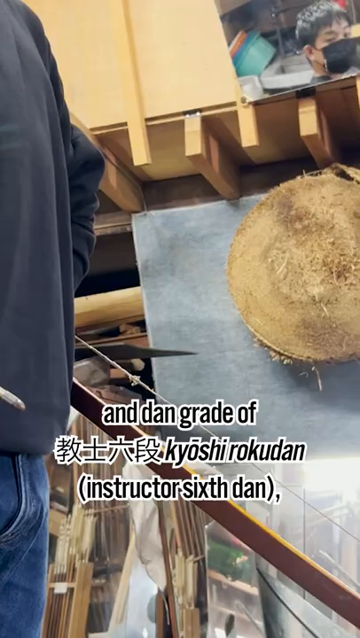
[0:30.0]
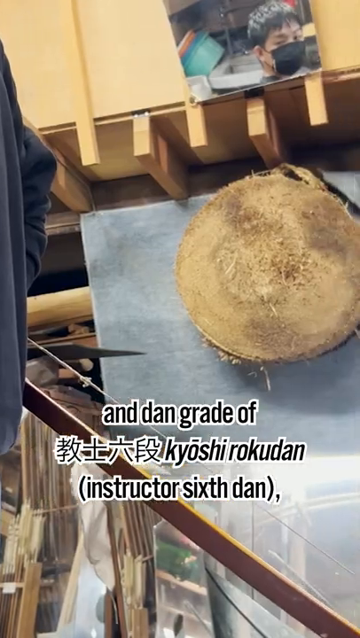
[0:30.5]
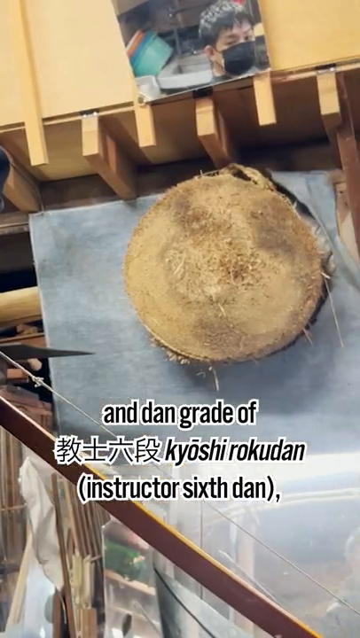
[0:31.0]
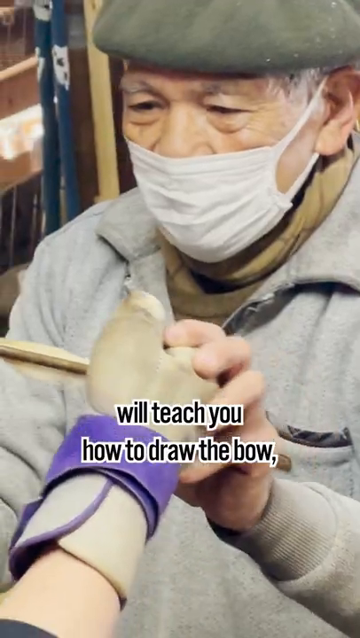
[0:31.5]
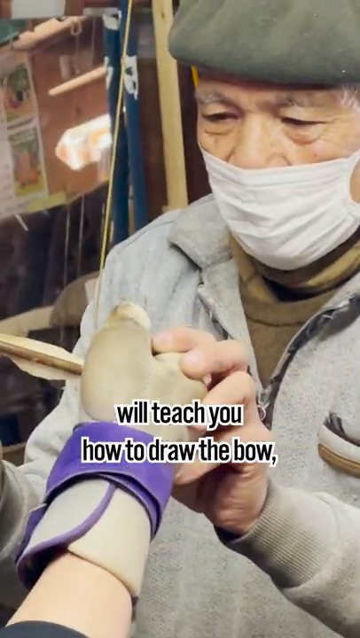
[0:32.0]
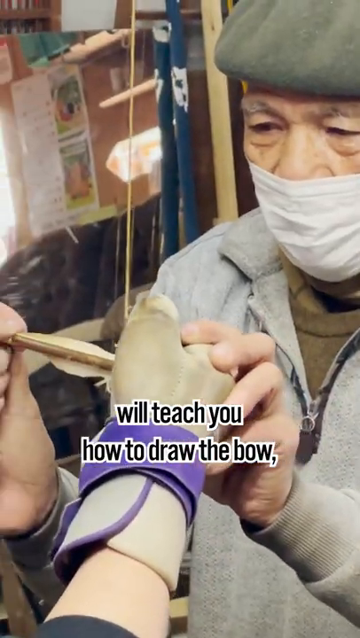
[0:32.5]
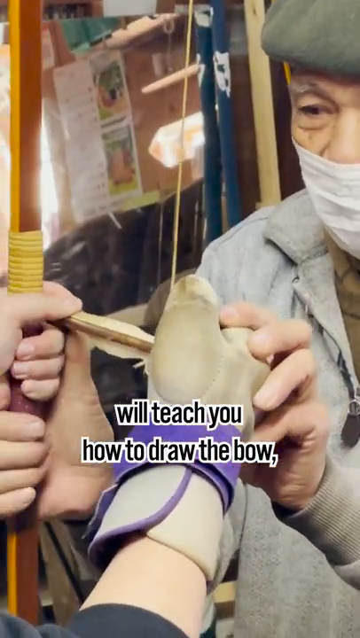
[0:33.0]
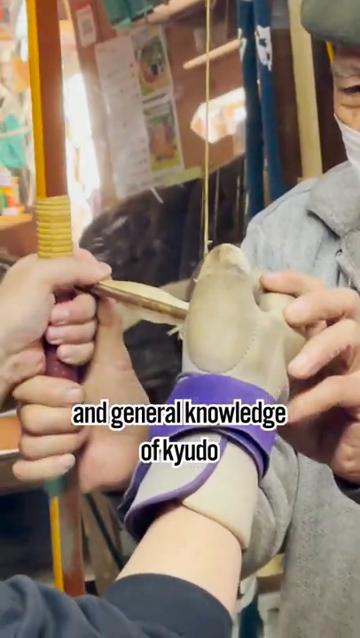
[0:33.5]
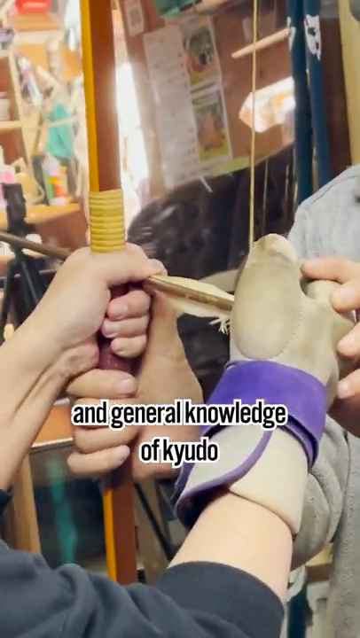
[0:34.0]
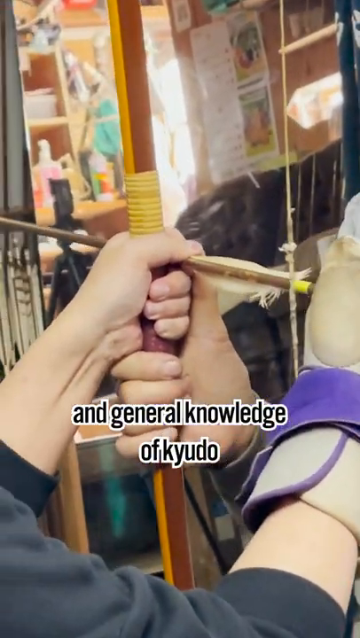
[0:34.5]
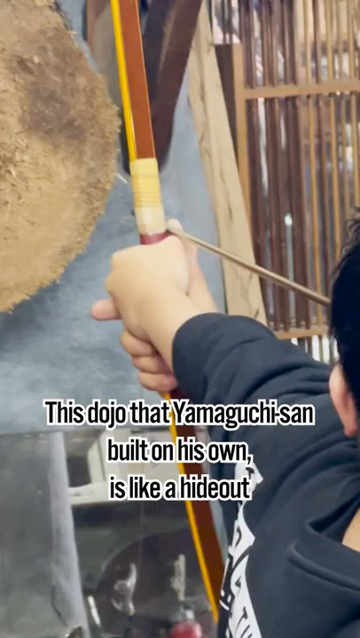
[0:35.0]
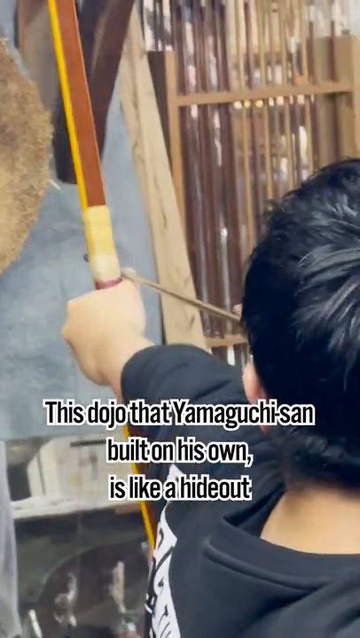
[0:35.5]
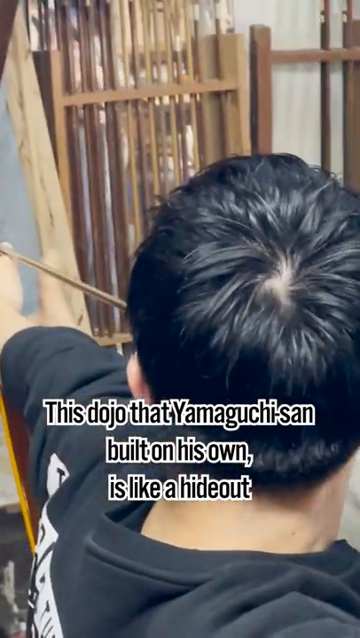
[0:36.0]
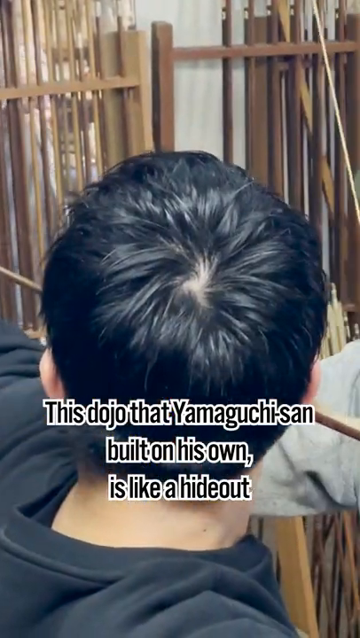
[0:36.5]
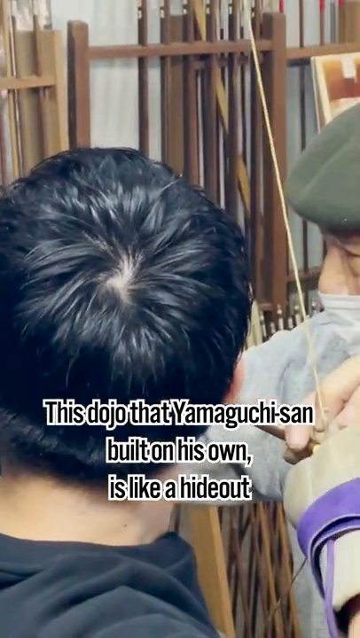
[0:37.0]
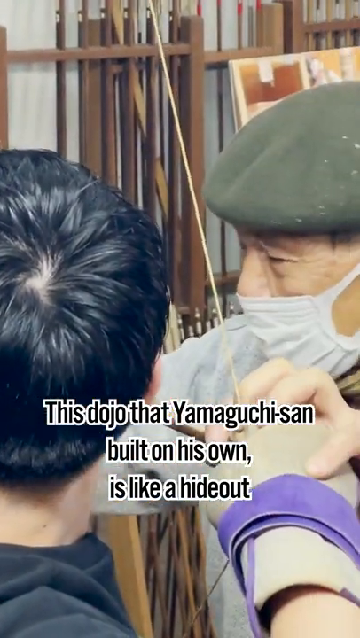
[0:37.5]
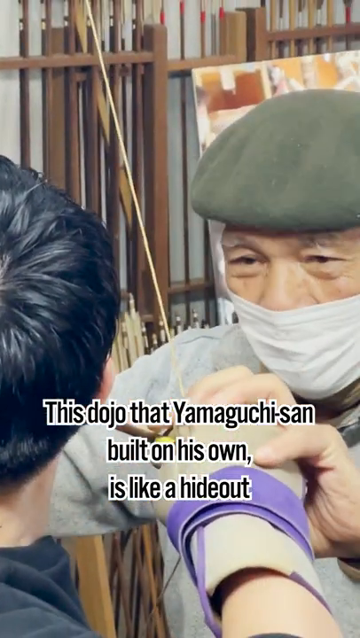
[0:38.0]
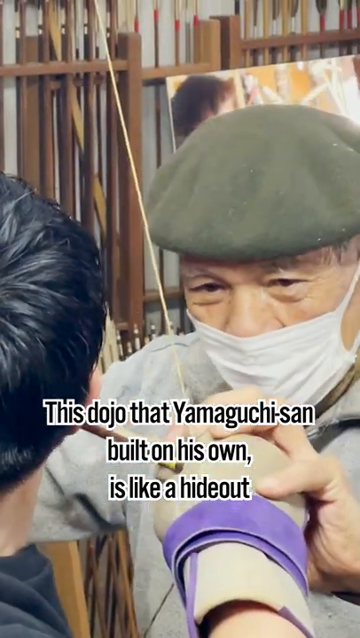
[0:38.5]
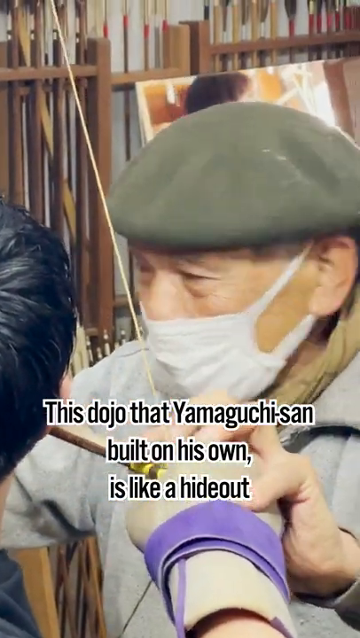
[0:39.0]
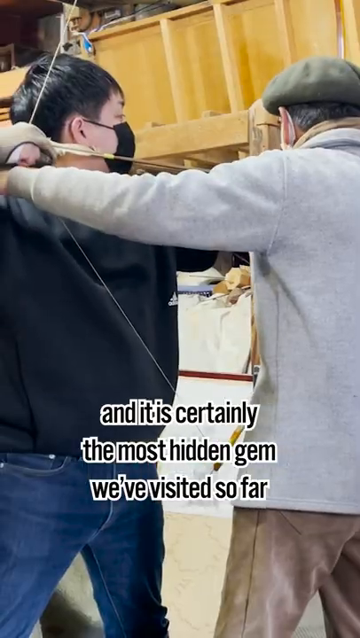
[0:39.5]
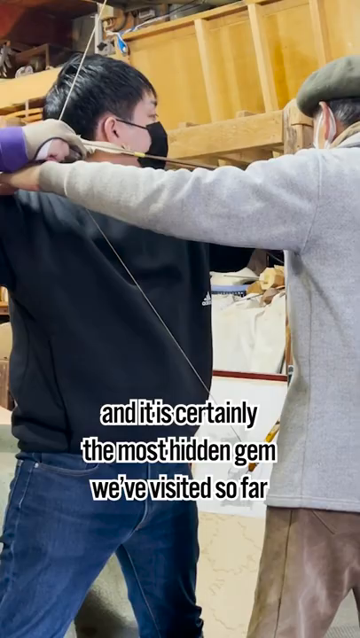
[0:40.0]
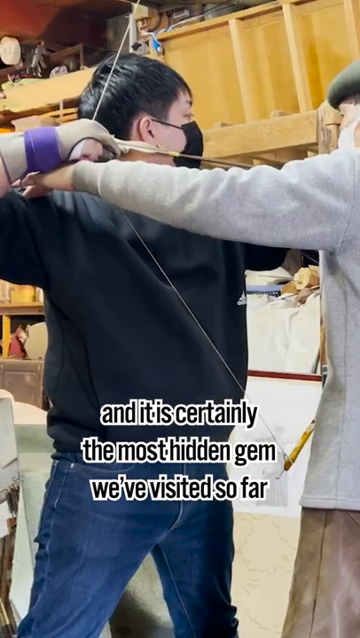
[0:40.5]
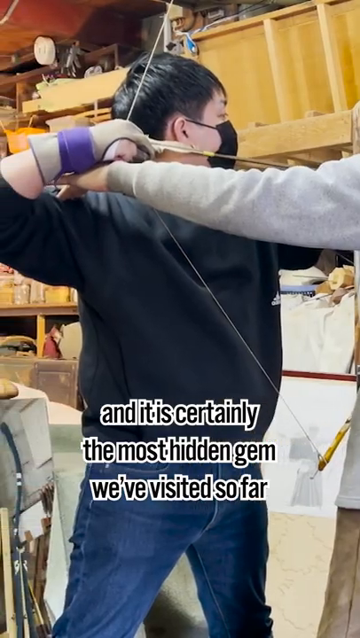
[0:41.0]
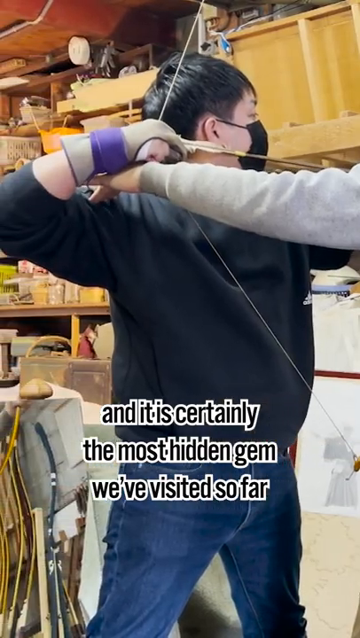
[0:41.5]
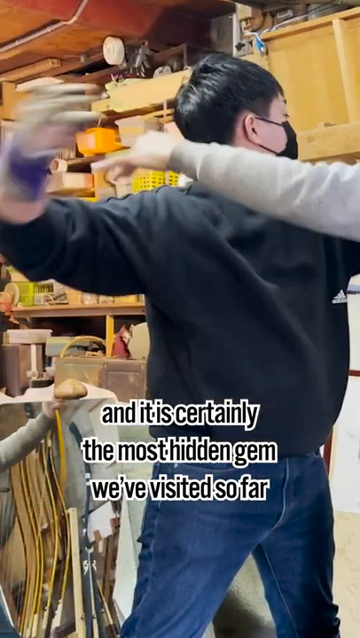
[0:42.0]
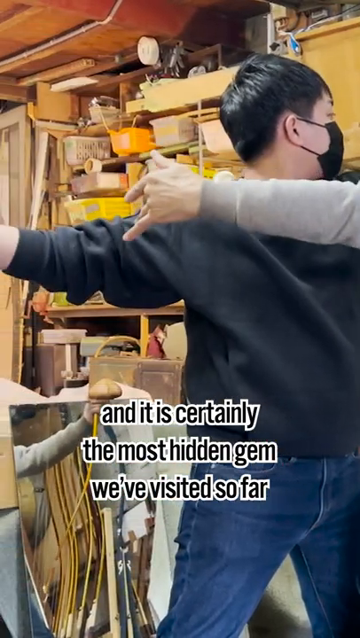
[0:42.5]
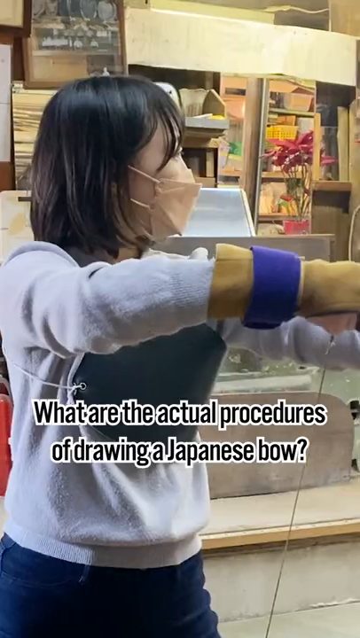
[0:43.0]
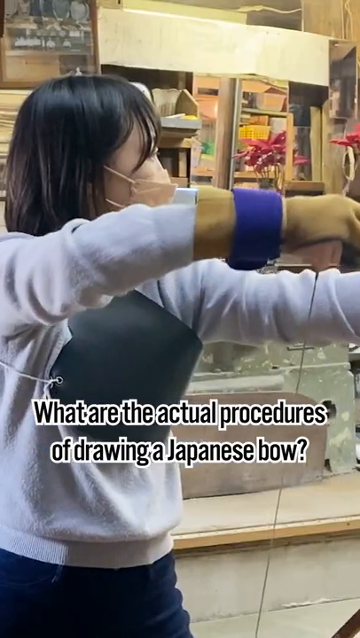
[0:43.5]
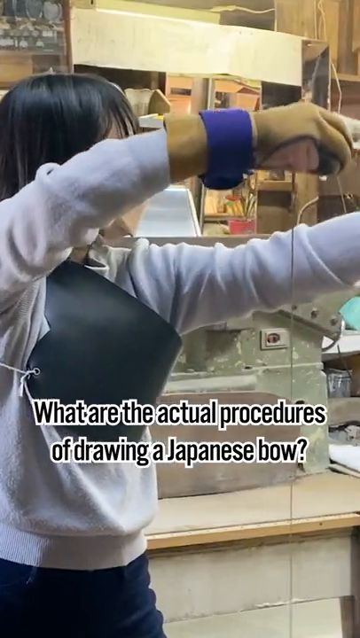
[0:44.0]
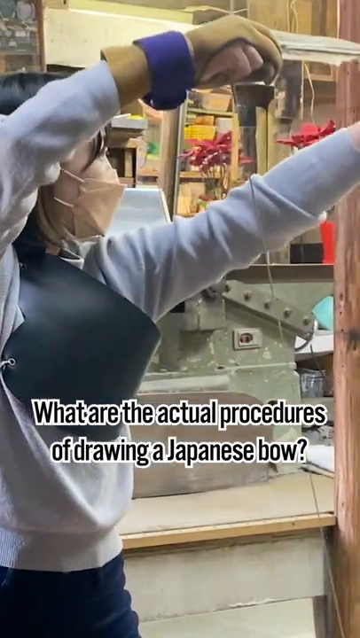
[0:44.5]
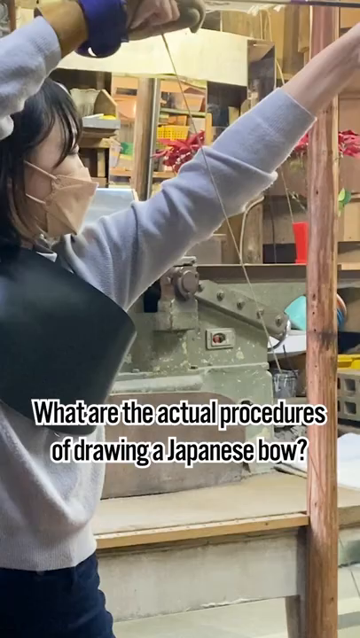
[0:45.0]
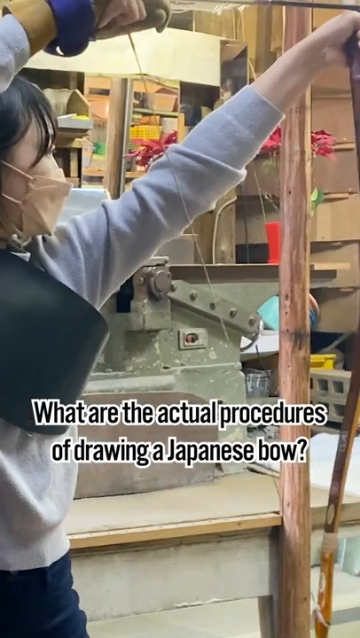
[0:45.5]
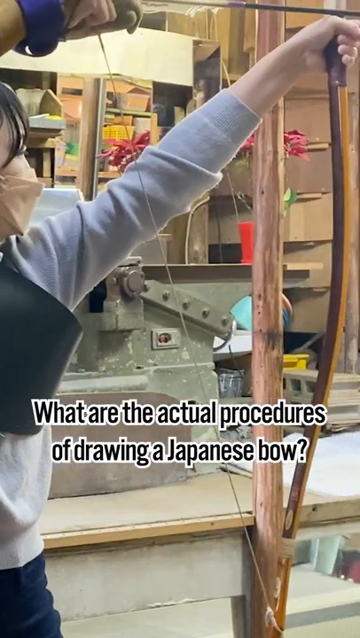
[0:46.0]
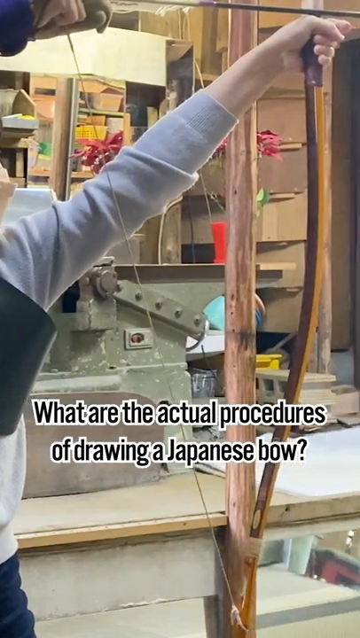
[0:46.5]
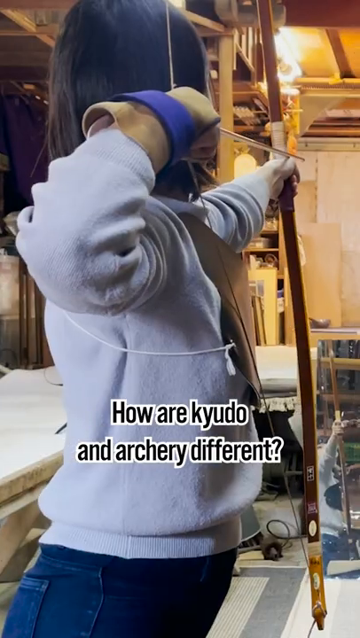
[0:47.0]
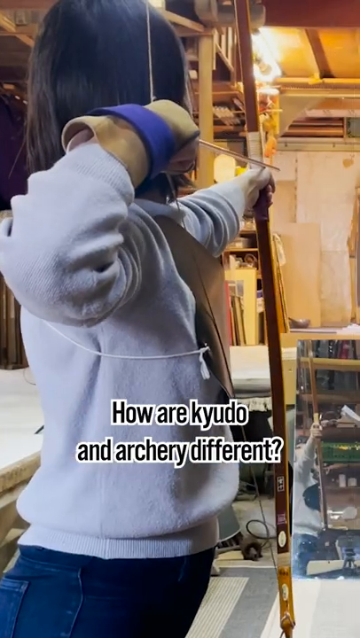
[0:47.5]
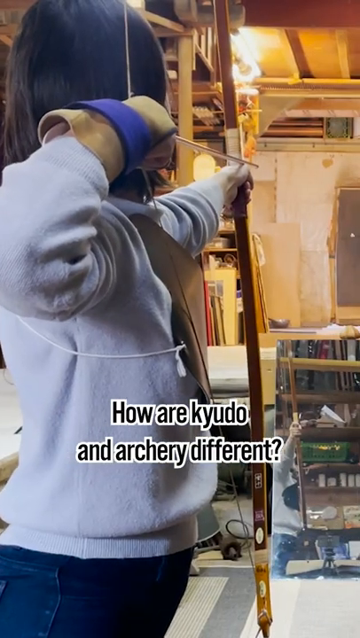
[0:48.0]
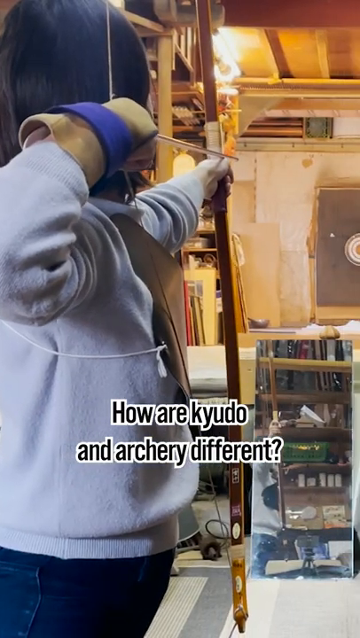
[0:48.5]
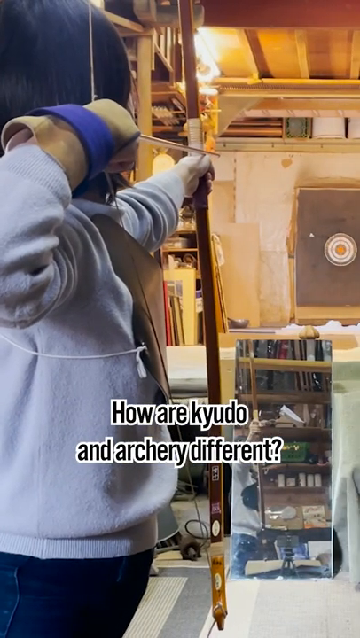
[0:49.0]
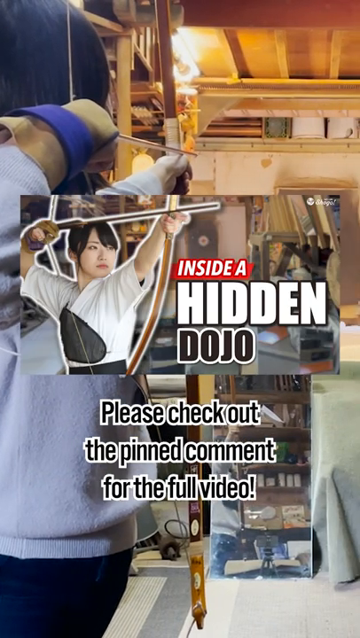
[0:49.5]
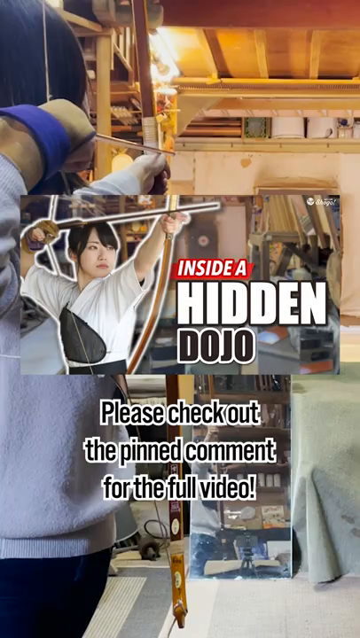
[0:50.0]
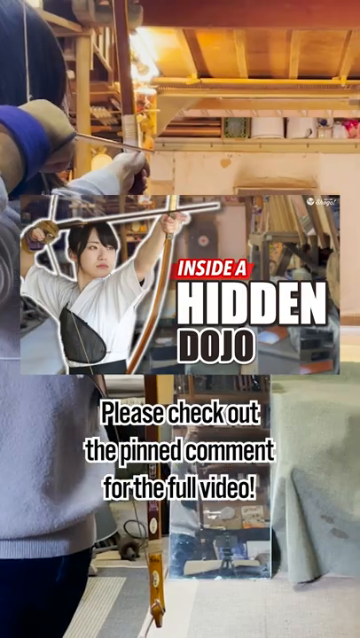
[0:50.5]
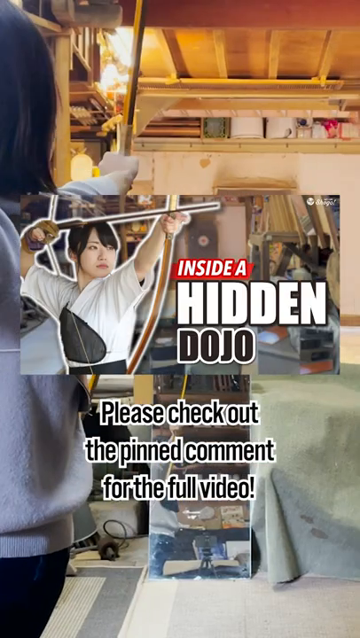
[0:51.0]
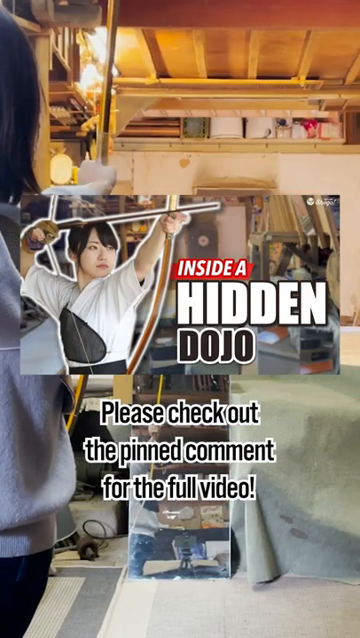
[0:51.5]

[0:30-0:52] Words on the screen read "Dan grade of Kiyoshi Rokudan instructors six Dan." A person is being instructed in how to draw the bow; this person's right hand is fully gloved, with a brace around the wrist, and the instructor teaches them how to hold both ends. Text reads "this dojo that was built on his own is like a hideout," apparently meaning the place where they practice is a hideout, followed by "it's certainly the most hidden gem we've visited so far." Then text reads "what are the actual procedures of drawing a Japanese bow how are kyudo and archery different please check out the pinned comment for the full video." The instructor, the students, the bows, the arrows and the targets are shown, and a person helps another person, teaching them how to do this correctly.